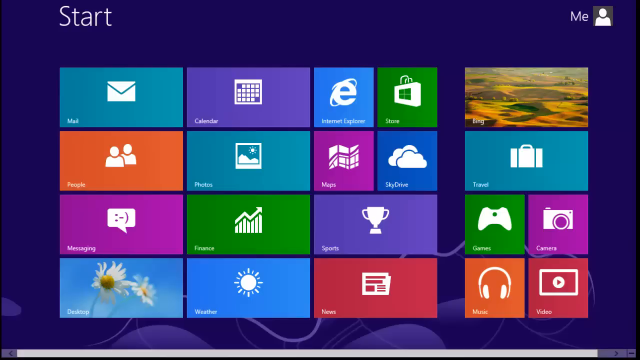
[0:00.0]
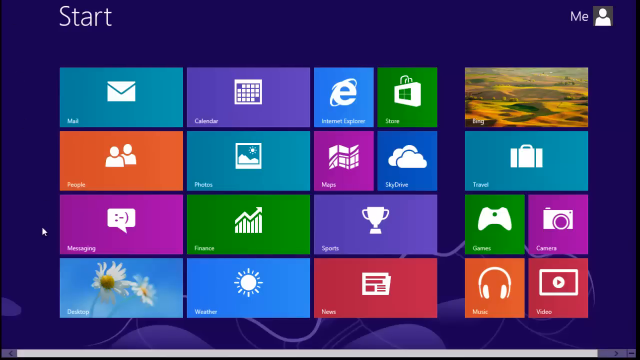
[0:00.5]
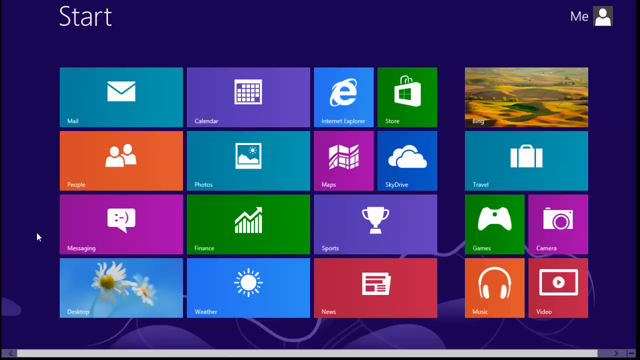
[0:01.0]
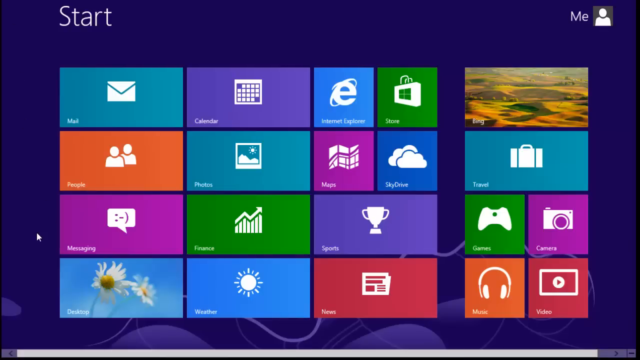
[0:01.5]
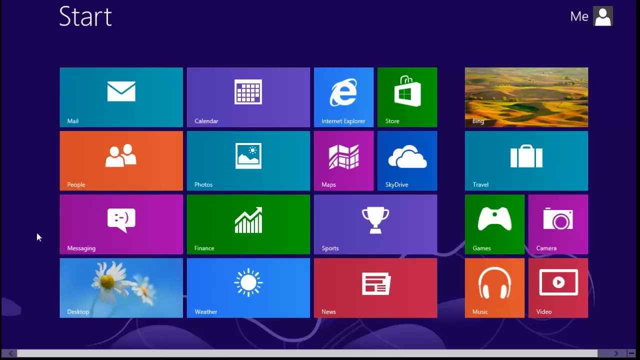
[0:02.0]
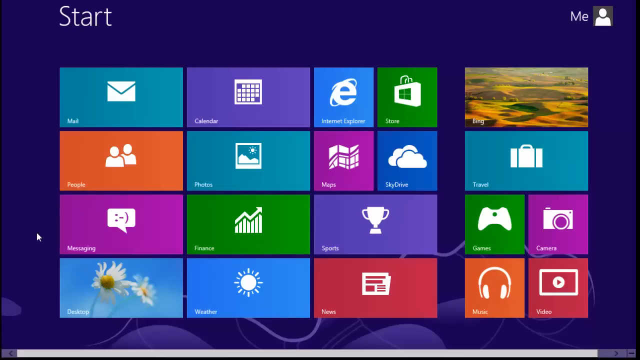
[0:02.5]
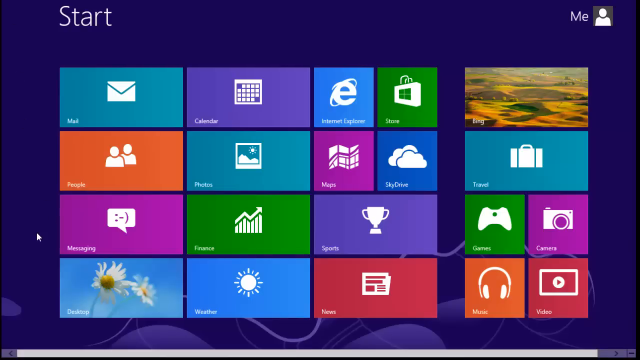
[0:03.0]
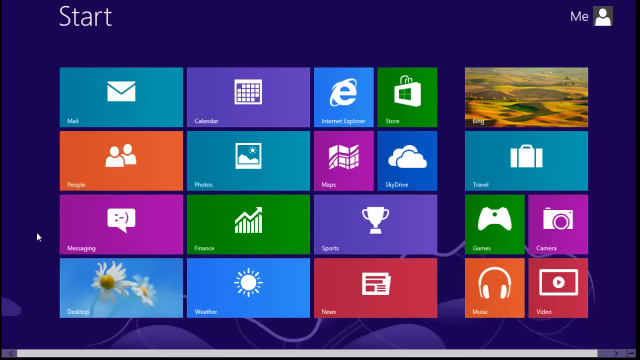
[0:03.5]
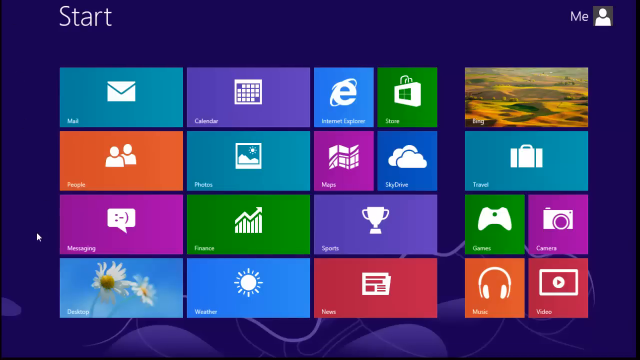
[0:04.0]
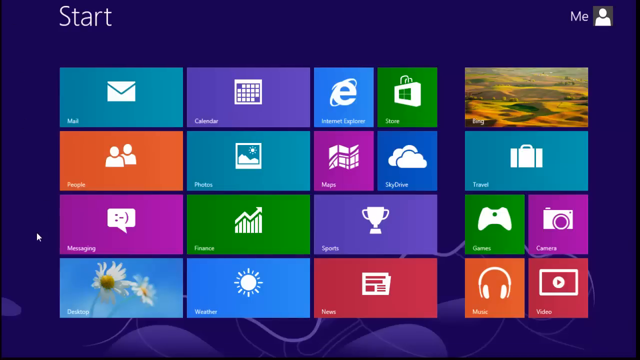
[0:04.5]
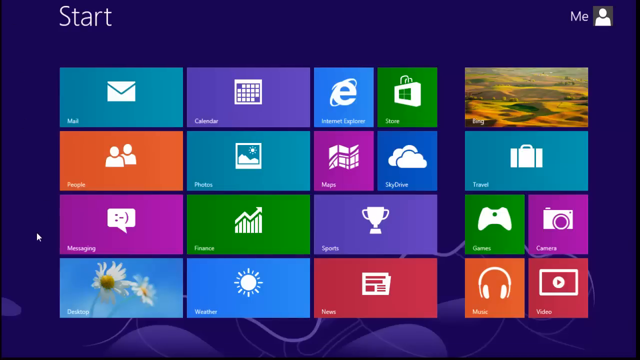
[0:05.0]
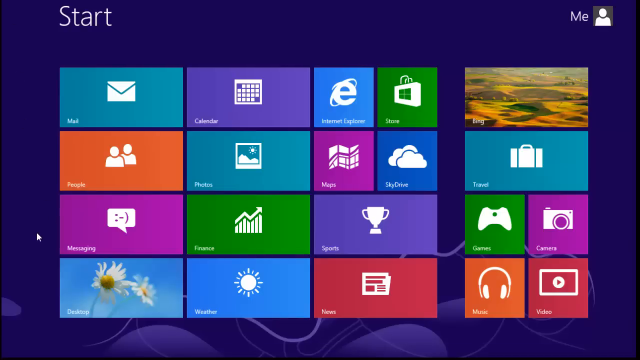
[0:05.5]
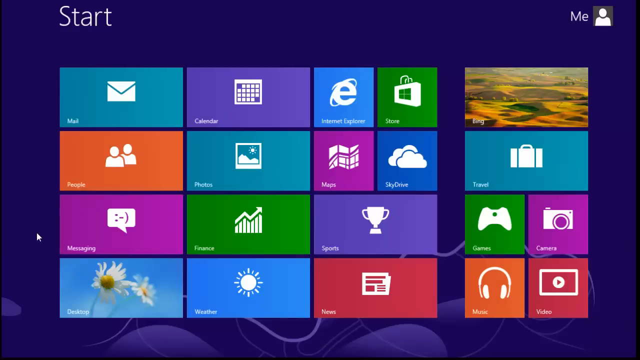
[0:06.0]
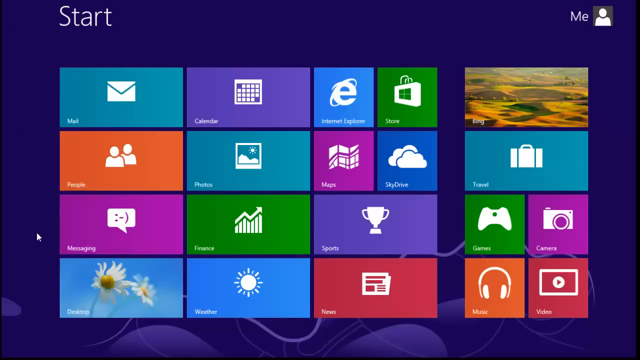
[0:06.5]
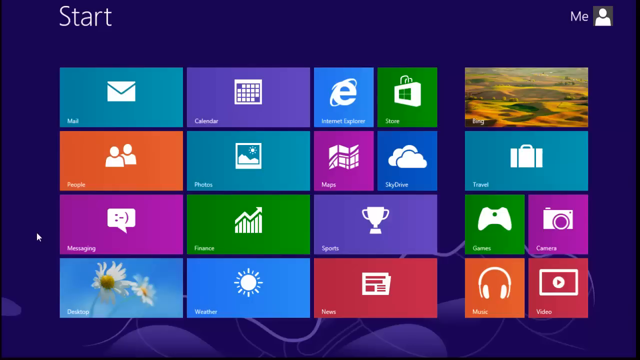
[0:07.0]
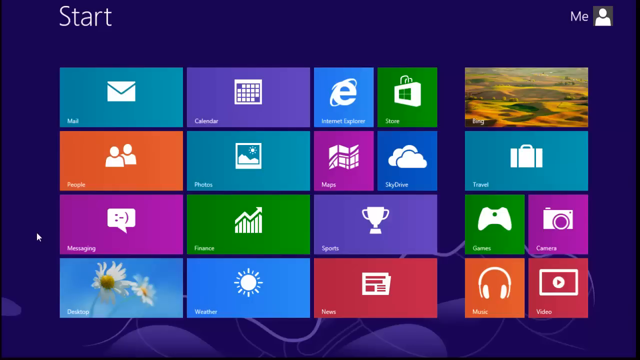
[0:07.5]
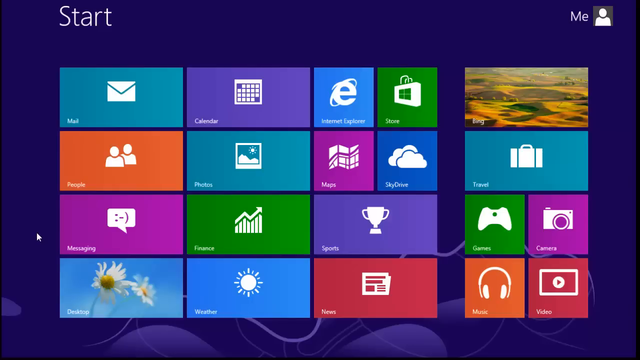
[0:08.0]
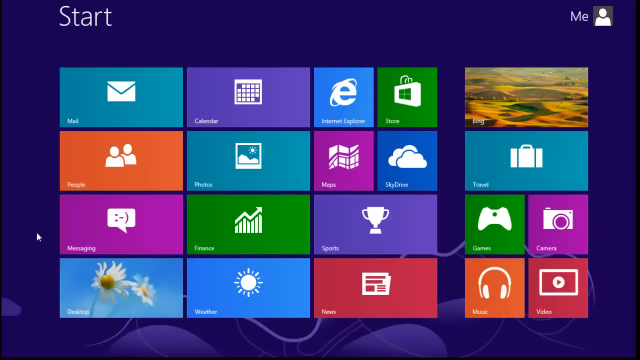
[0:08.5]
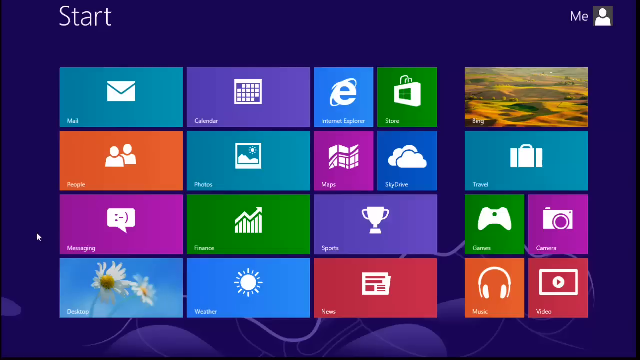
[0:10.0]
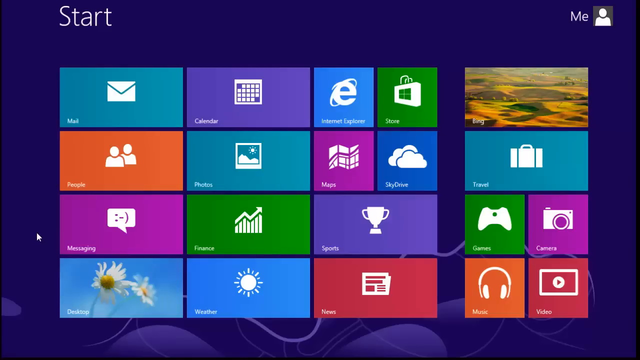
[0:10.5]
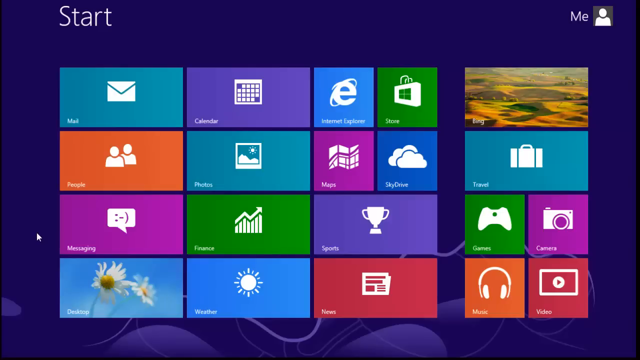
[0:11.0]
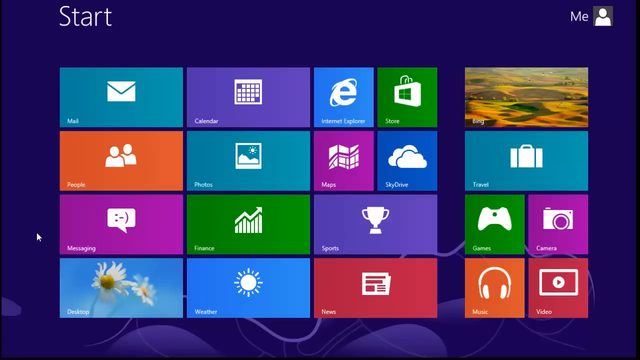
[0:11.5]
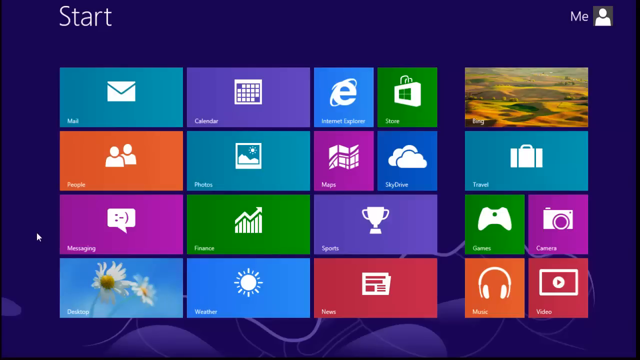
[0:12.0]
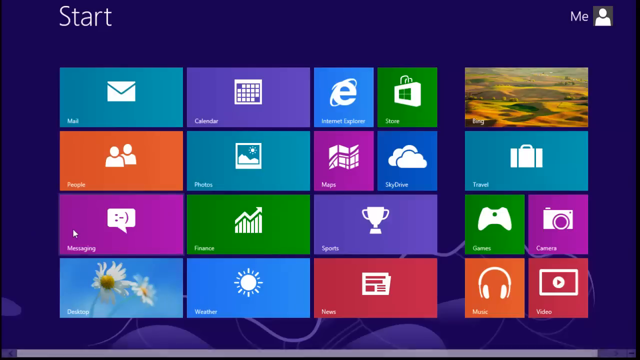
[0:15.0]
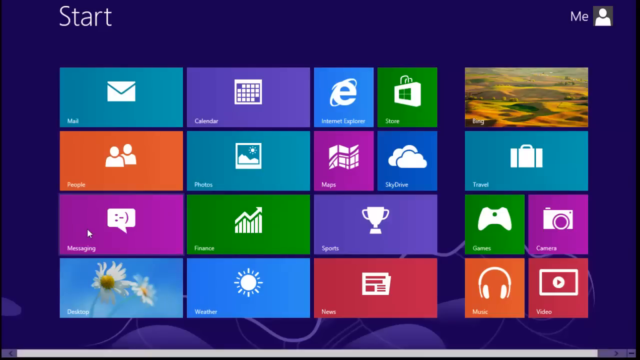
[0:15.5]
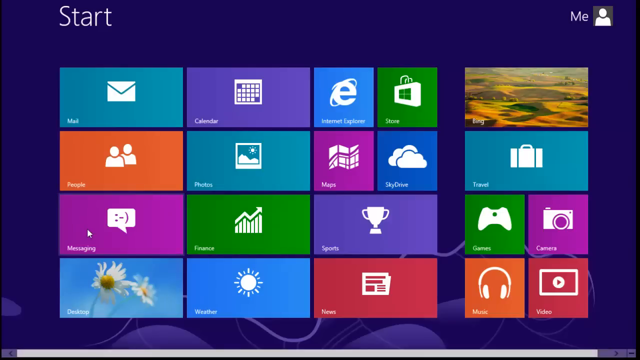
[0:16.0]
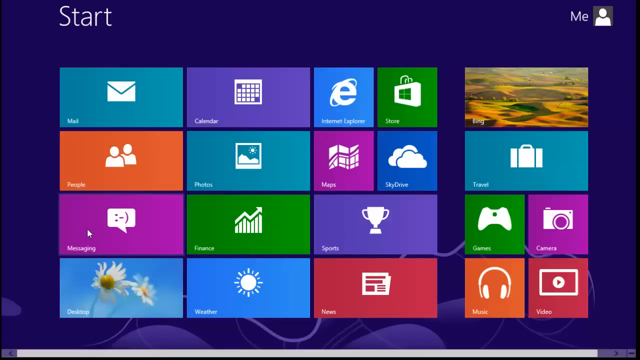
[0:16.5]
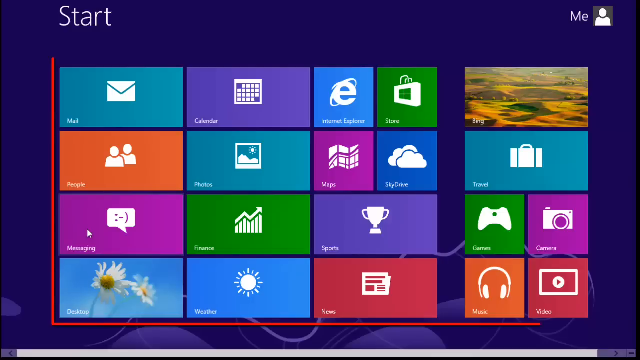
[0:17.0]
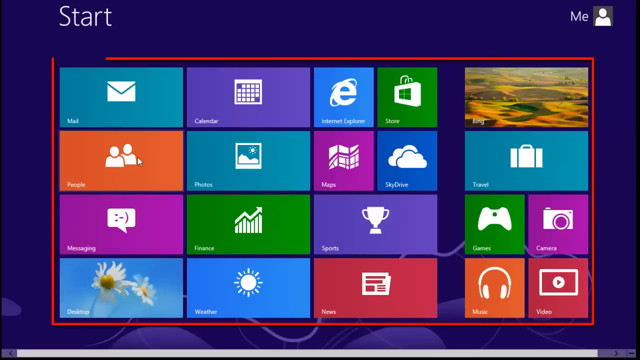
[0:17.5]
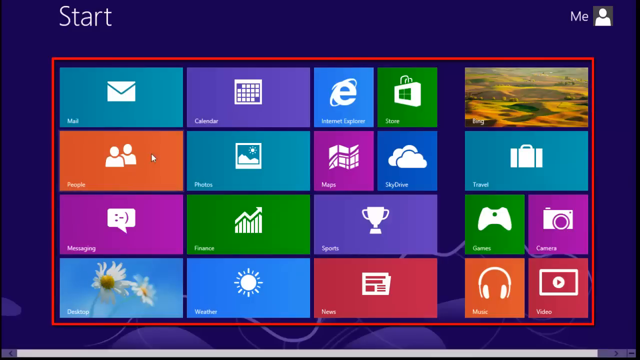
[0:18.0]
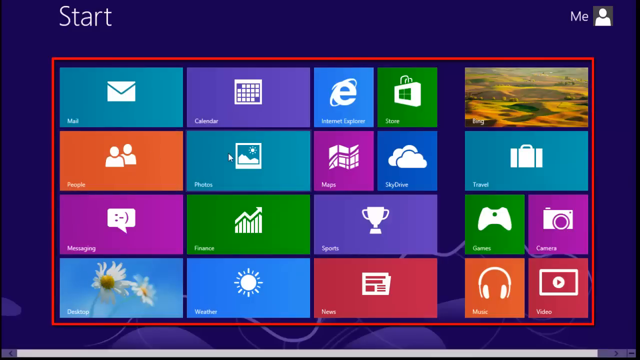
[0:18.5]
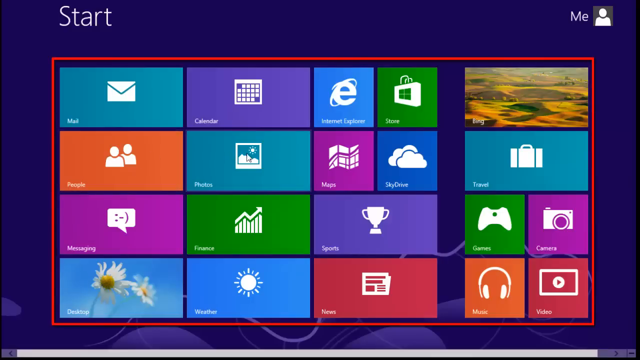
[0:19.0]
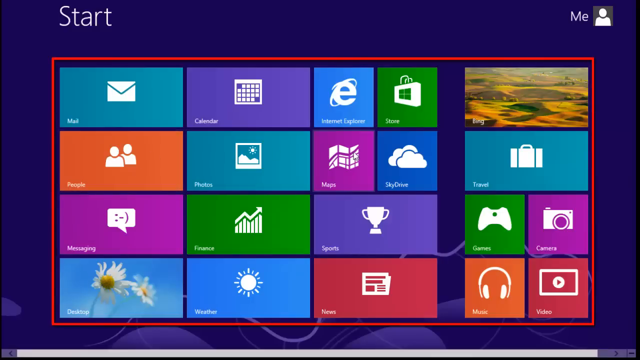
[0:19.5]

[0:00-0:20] A purple Windows menu screen appears, with "Start" in white text at the top left and a profile icon at the top right. Various tabs are visible, such as Mail, Calendar, Internet Explorer, Photos, and Sports. A mouse cursor moves from the top left of the screen down toward the lower middle third and stops on the left side of the screen, next to a purple tab that says "Messaging." The cursor sits at that spot, then moves slightly to the right and hovers over the Messaging tab. A red outline forms around all the tabs, starting at the top left, going counterclockwise around them, and connecting back at the top left. The cursor then moves up toward the People tab, right over Photos, right again over Maps, and down to Sports.